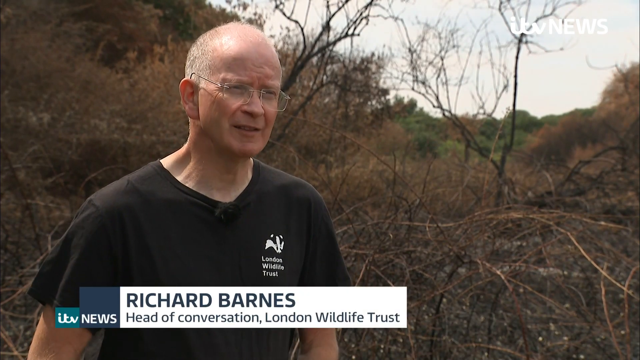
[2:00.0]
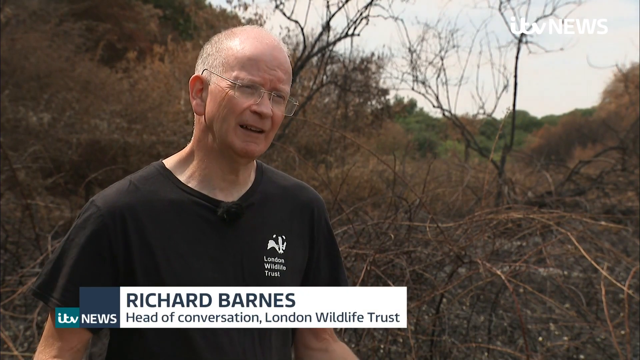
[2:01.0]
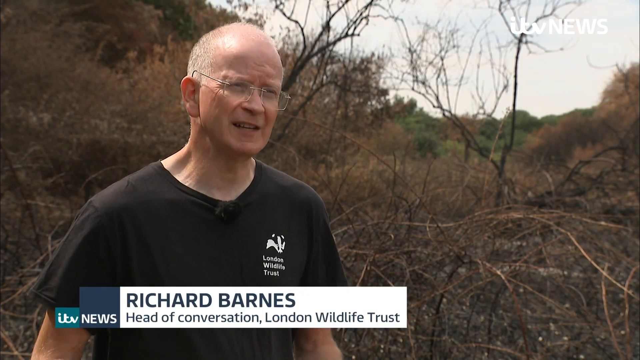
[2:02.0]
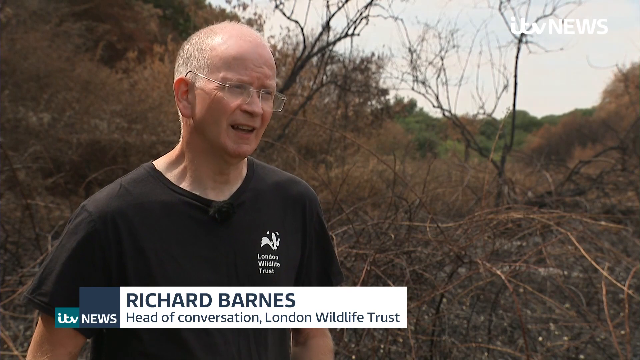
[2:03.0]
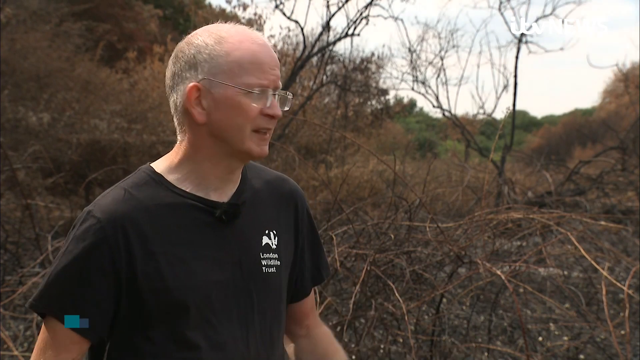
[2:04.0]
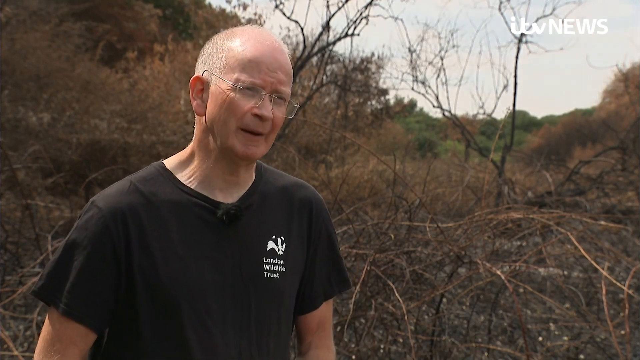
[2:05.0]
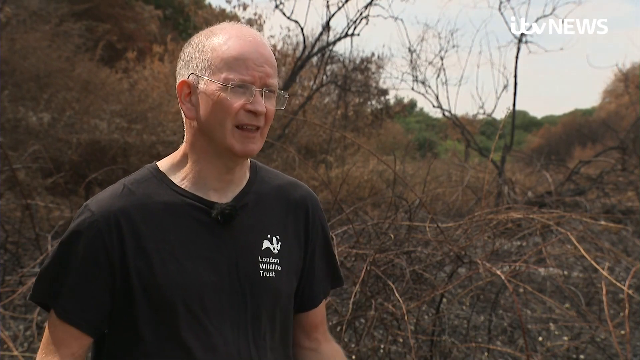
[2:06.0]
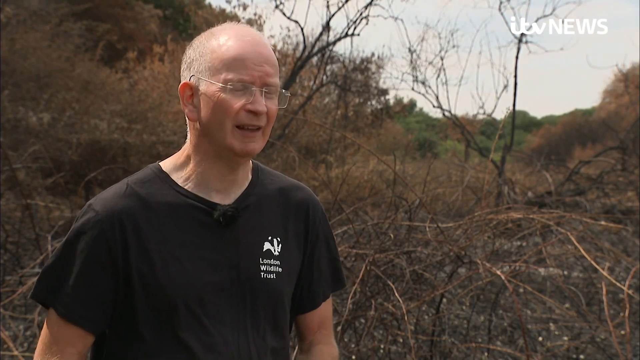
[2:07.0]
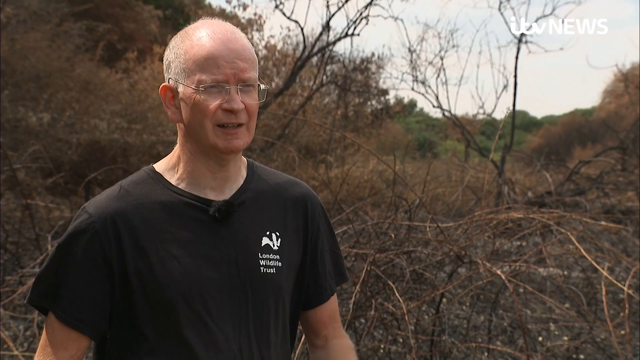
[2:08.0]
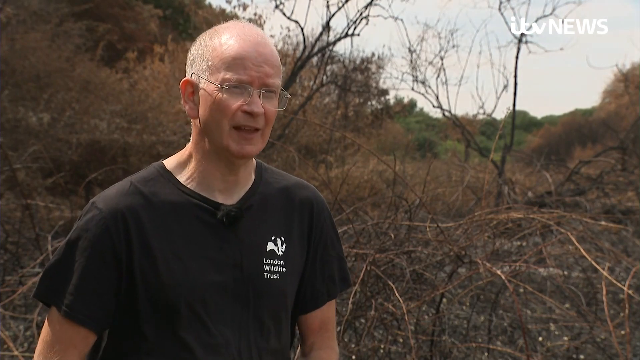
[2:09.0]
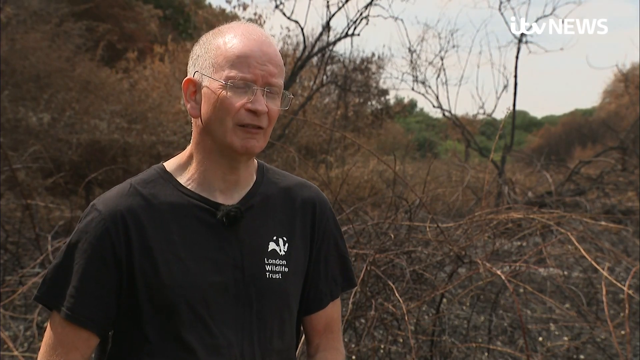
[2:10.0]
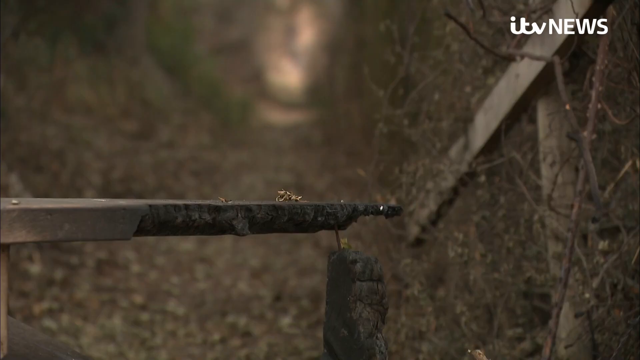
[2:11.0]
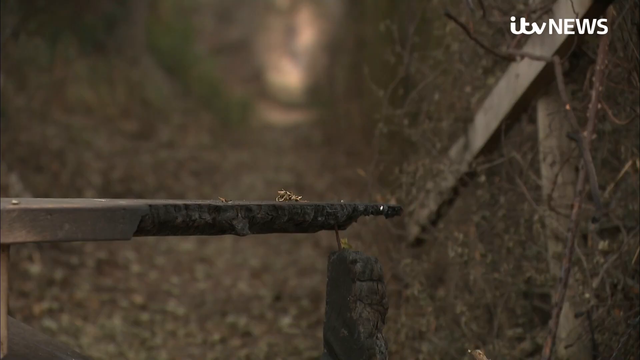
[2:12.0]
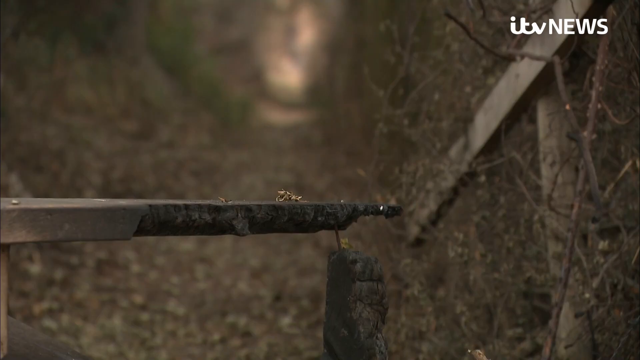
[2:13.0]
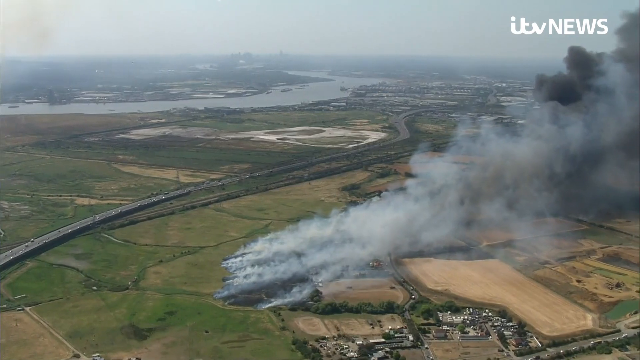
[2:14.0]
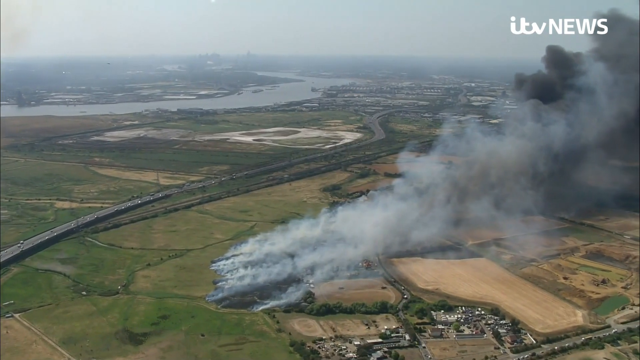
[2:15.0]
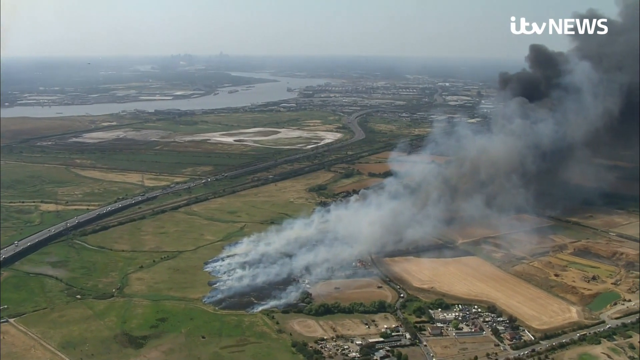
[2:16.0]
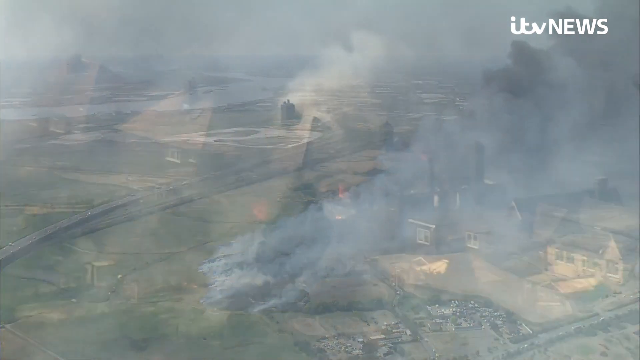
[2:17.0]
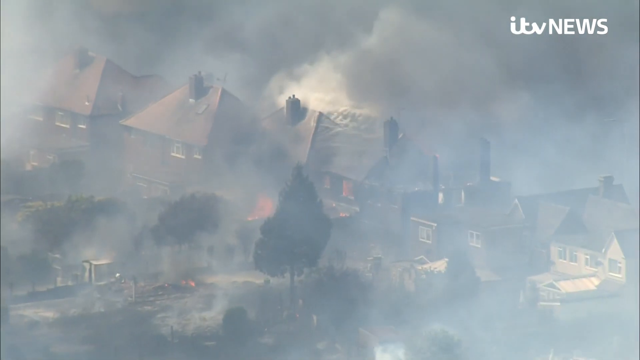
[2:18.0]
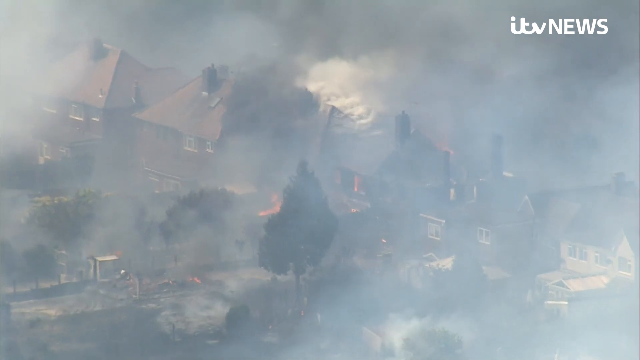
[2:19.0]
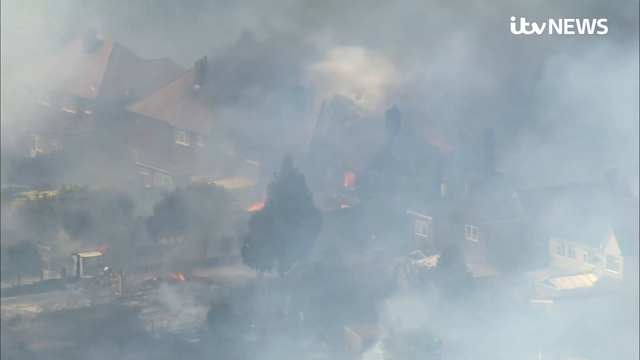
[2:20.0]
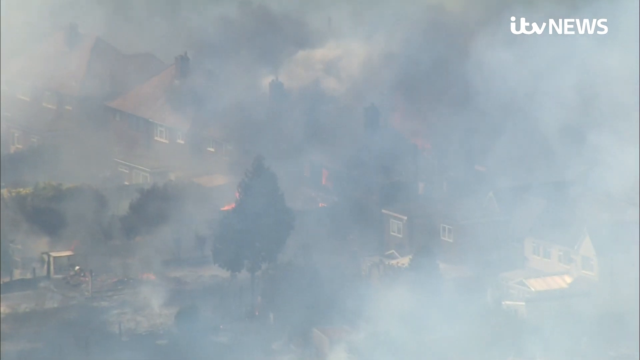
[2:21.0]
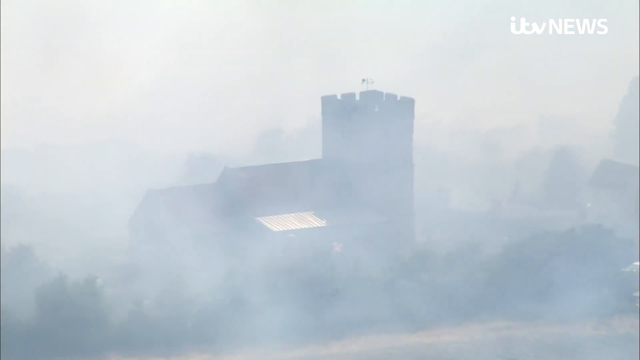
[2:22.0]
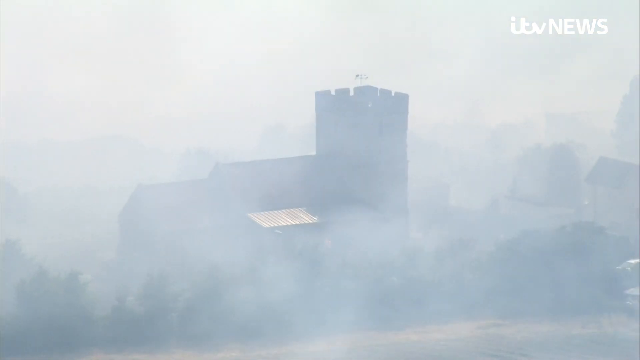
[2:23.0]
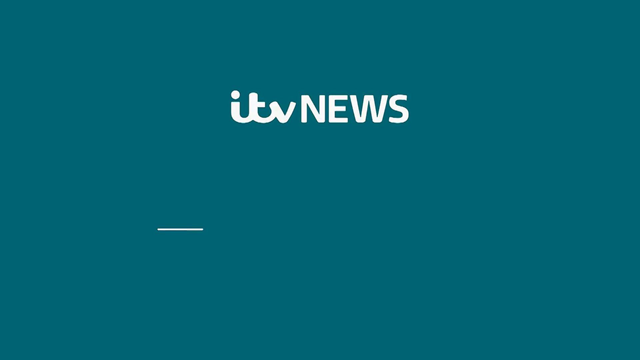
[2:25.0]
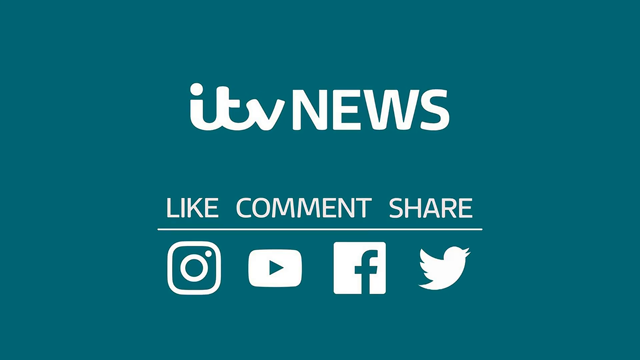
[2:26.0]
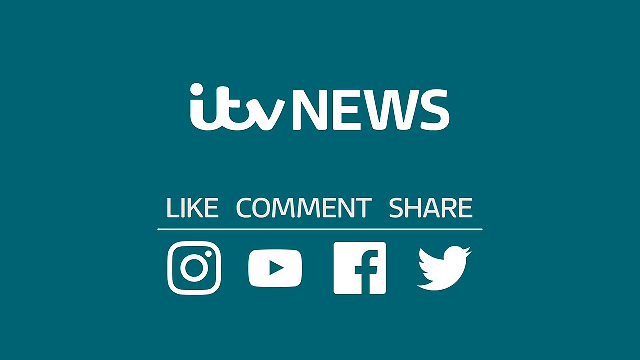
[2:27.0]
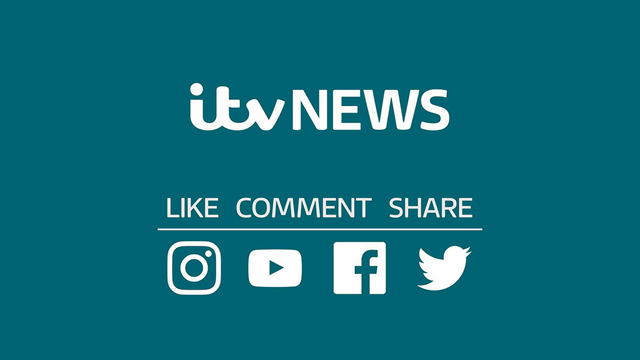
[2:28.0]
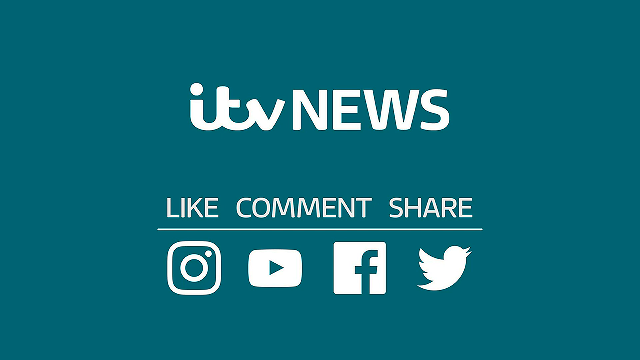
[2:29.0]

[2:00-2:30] A man in a black t-shirt, with glasses and very short white hair, stands in front of a field of dried brush and grasses, speaking to the camera. Next comes a burnt piece of wood, then an aerial view of a large fire below, with massive gray plumes of smoke coming from the ground. A house is then shown on fire: it is the third house in a row of houses, with black smoke behind the row and white smoke coming out of the burning house. Flames are visible in its front windows and front yard, and there are some small flames in the foreground across the street from the home. Trees line the street, and it looks like all the houses are in danger. Next, a castle appears in the midst of thick fog from a fire, showing the top of the castle with smoke billowing around it. The final scene reads "itv NEWS, LIKE, COMMENT, SHARE".